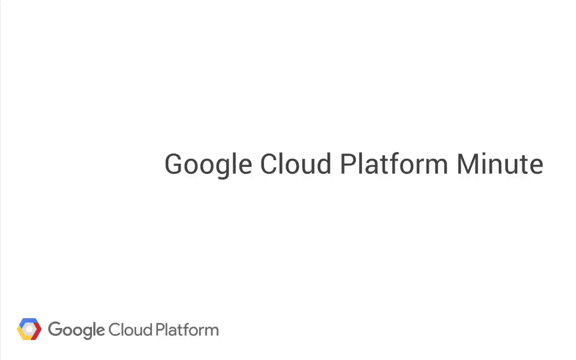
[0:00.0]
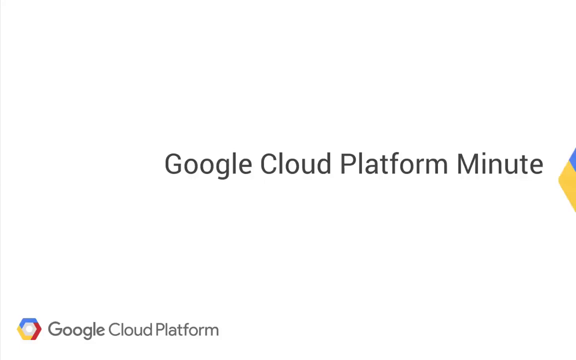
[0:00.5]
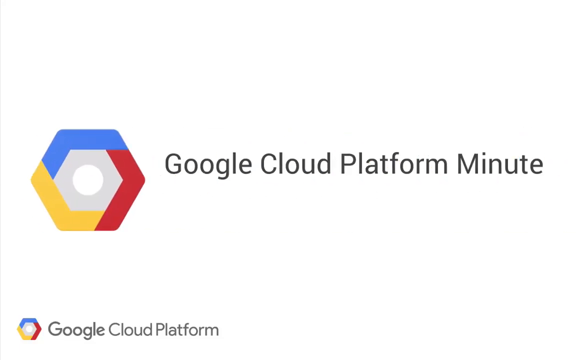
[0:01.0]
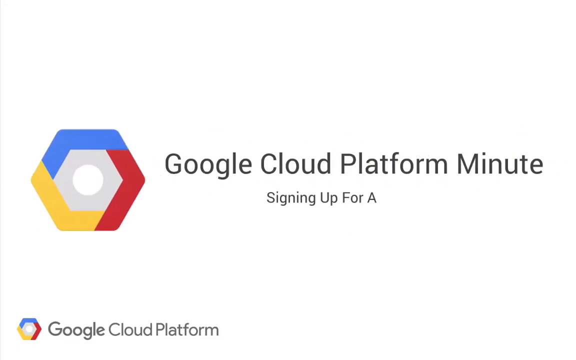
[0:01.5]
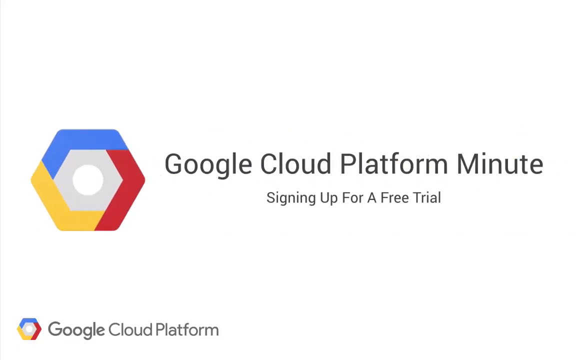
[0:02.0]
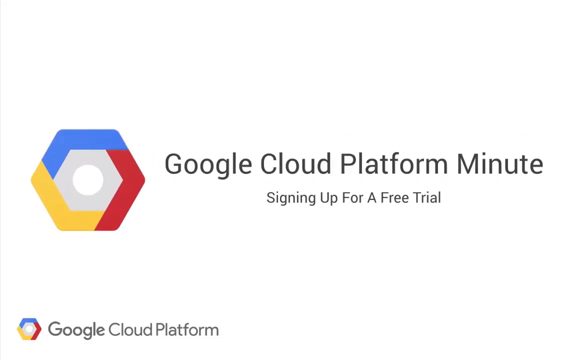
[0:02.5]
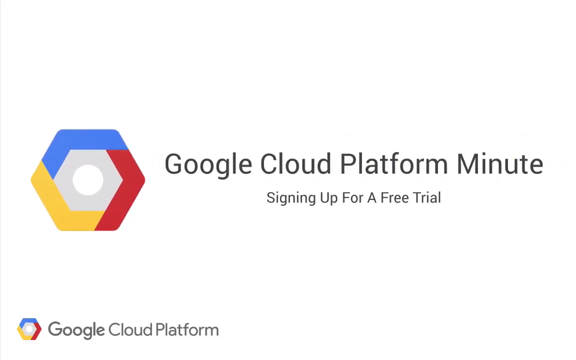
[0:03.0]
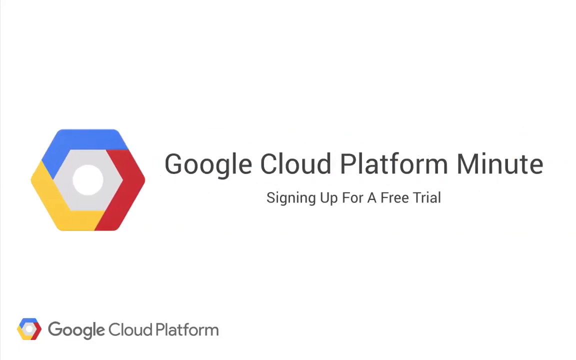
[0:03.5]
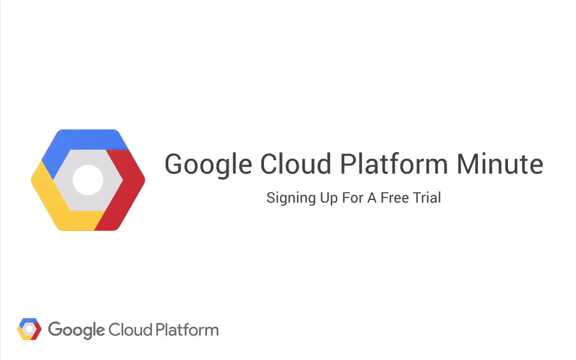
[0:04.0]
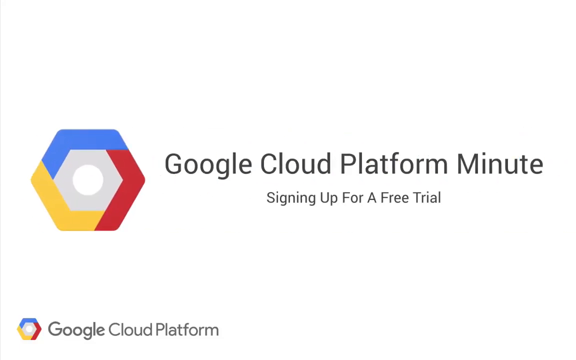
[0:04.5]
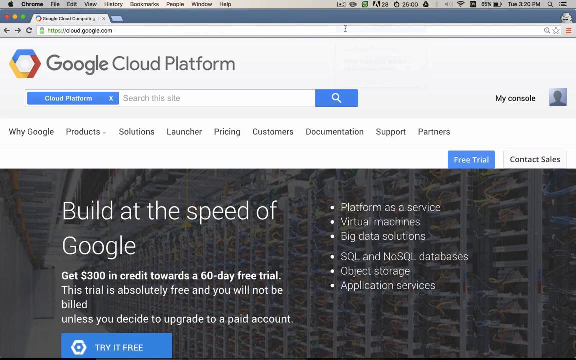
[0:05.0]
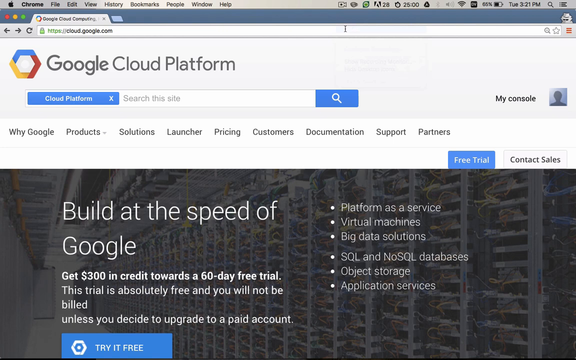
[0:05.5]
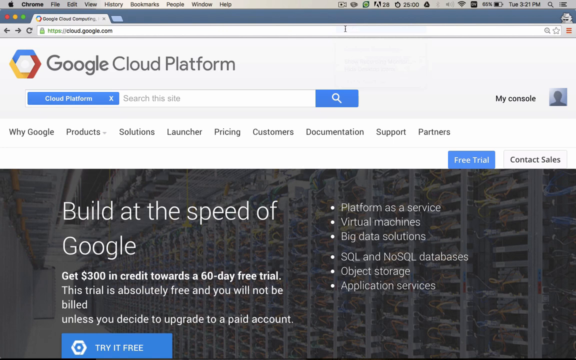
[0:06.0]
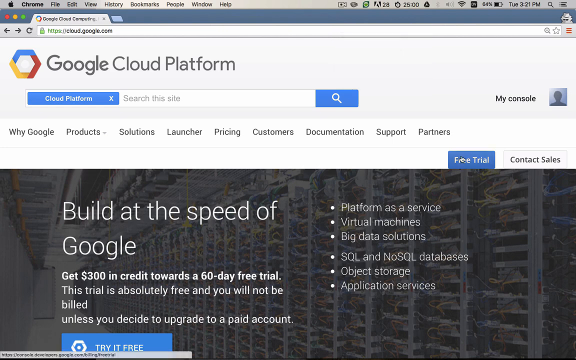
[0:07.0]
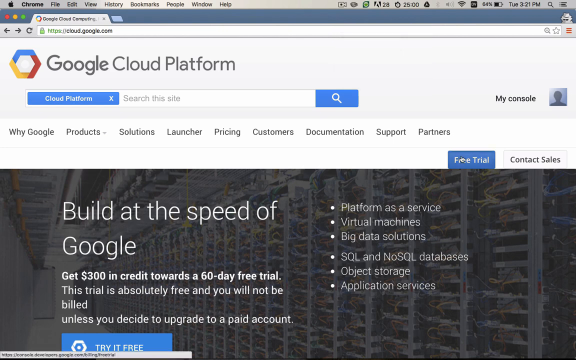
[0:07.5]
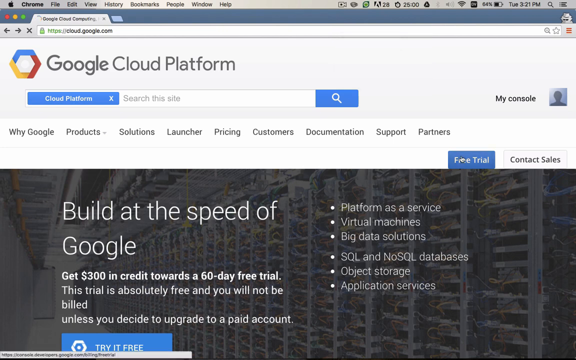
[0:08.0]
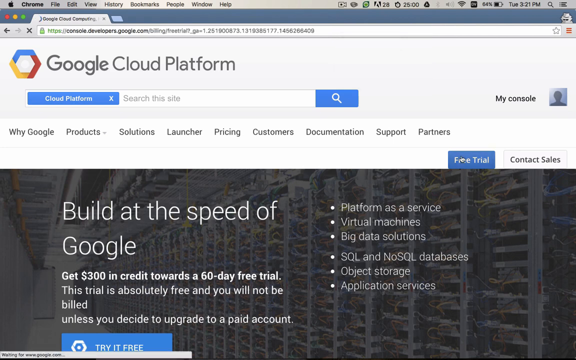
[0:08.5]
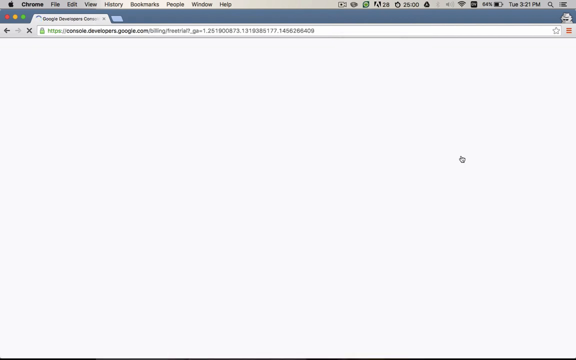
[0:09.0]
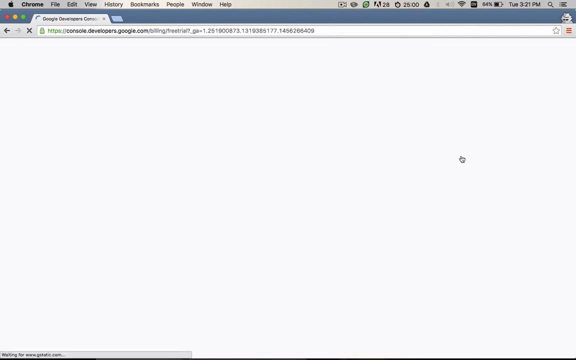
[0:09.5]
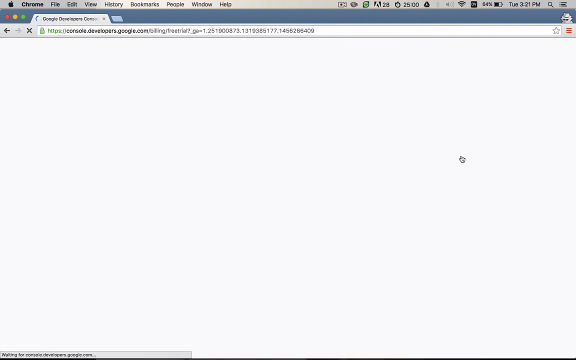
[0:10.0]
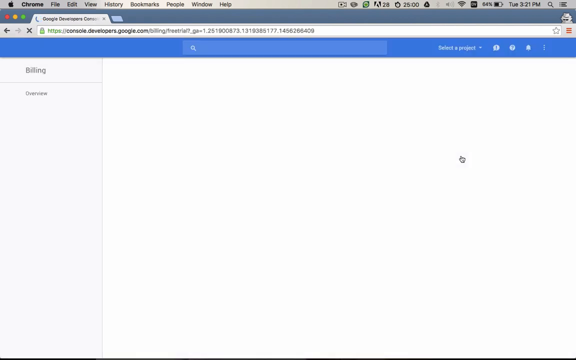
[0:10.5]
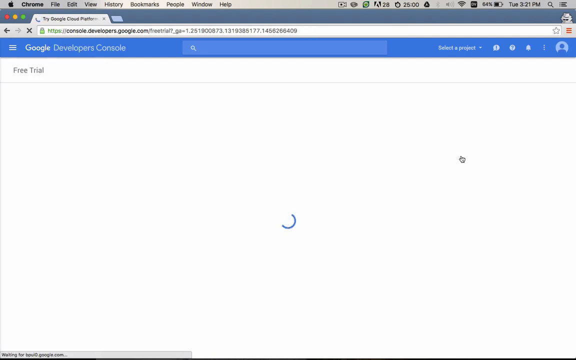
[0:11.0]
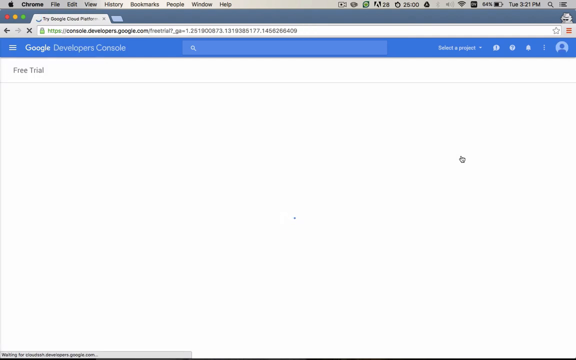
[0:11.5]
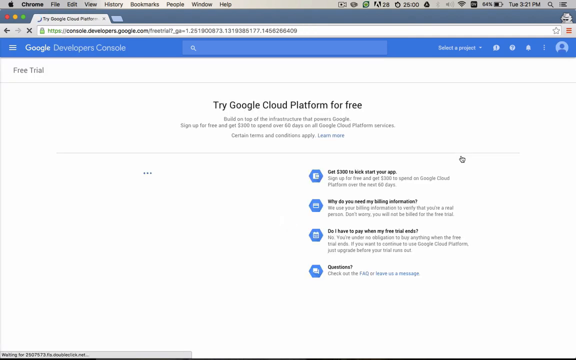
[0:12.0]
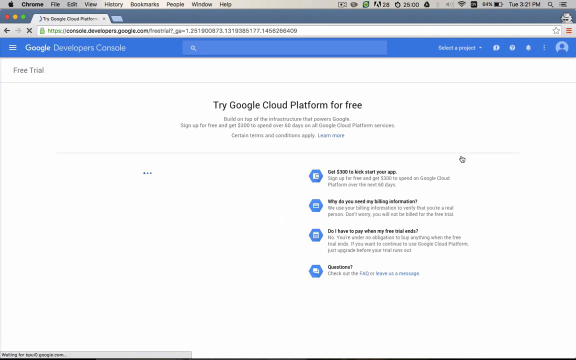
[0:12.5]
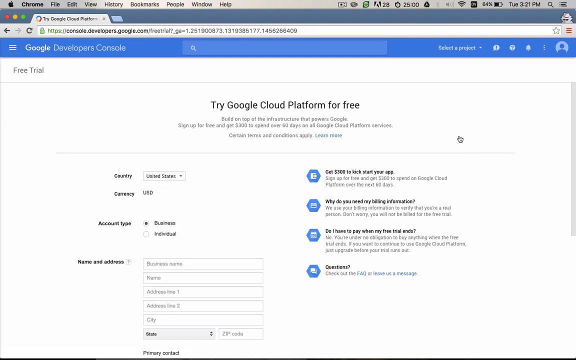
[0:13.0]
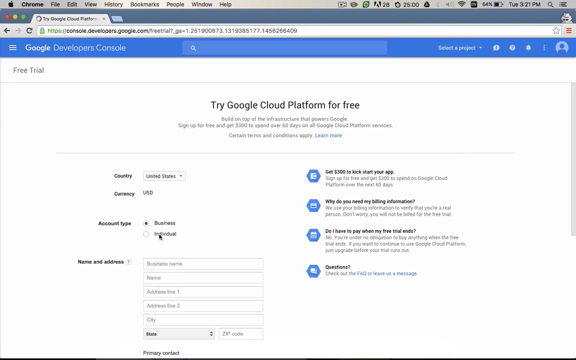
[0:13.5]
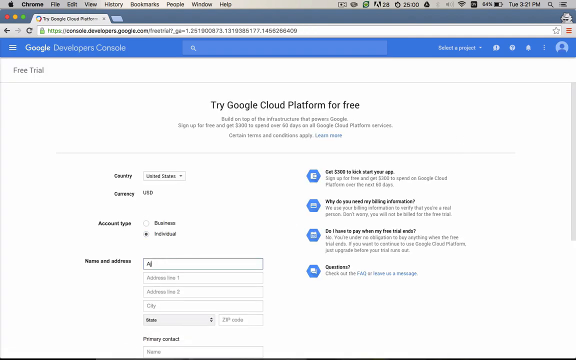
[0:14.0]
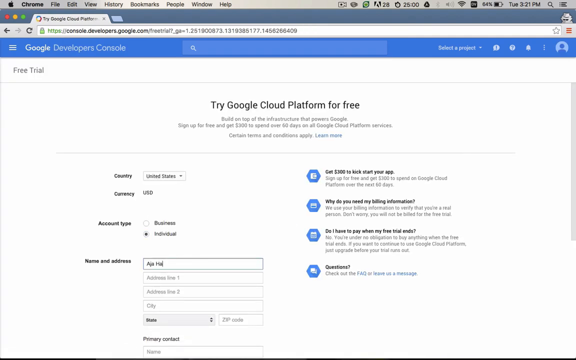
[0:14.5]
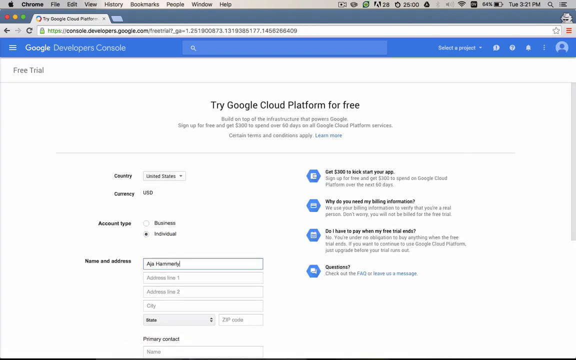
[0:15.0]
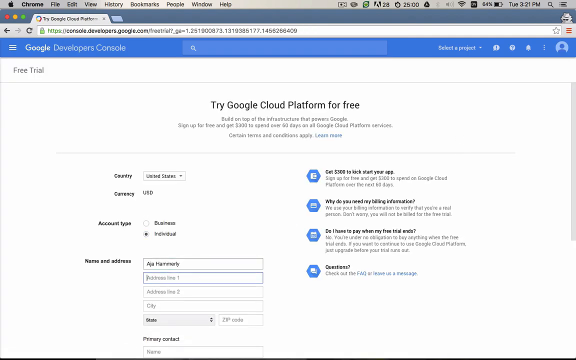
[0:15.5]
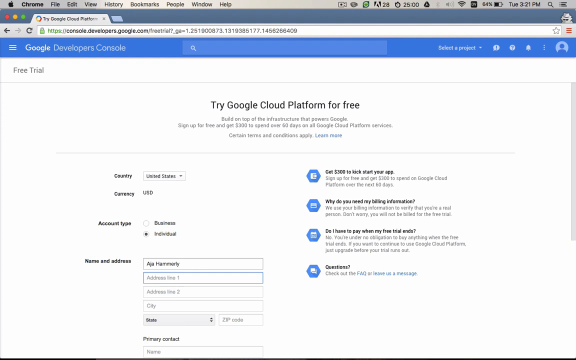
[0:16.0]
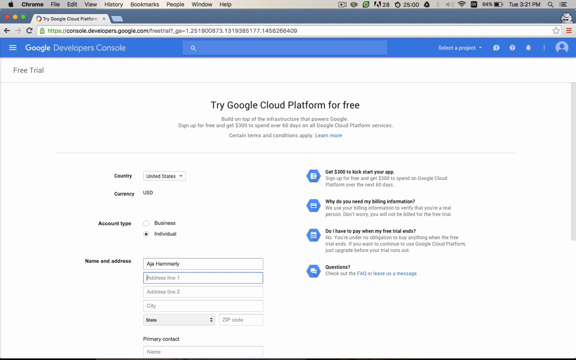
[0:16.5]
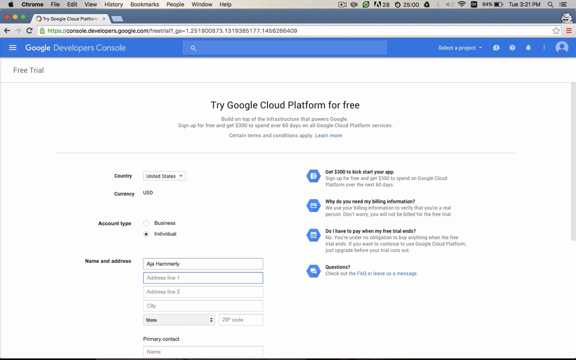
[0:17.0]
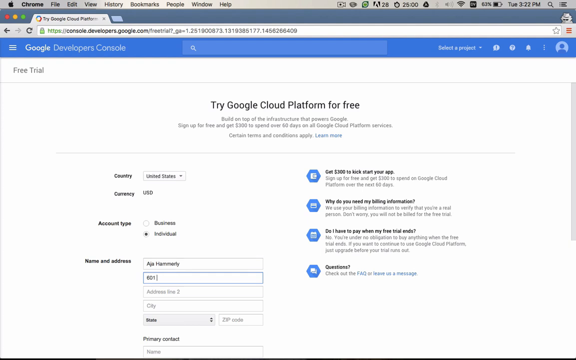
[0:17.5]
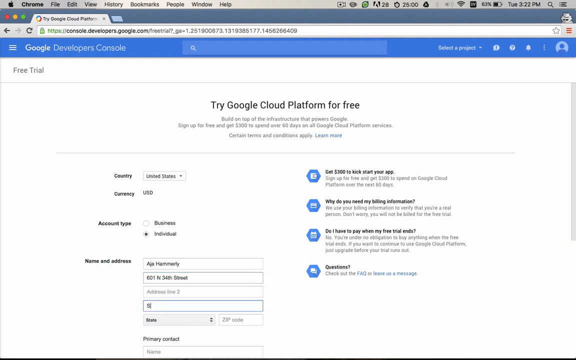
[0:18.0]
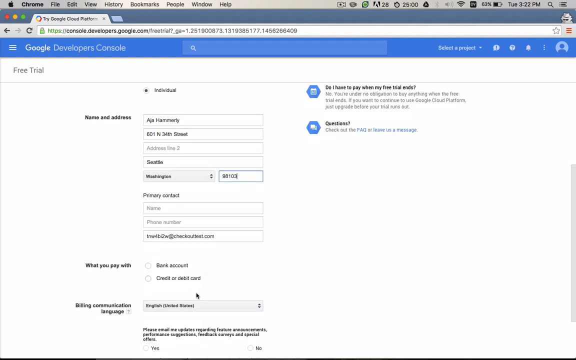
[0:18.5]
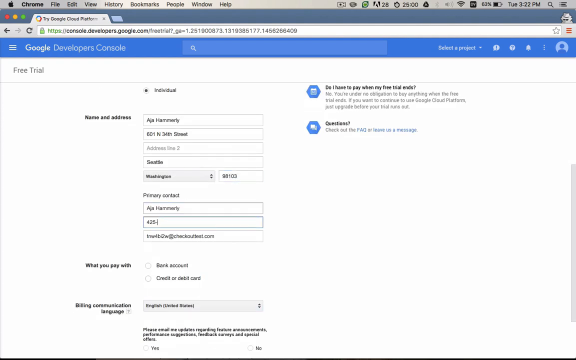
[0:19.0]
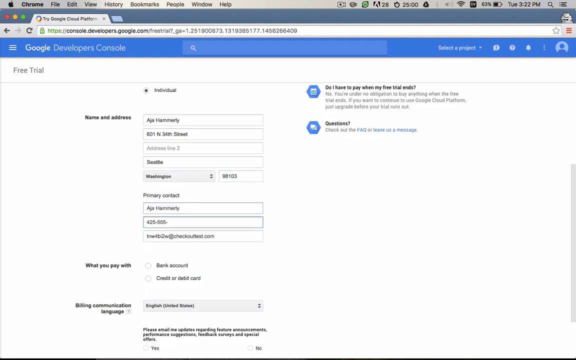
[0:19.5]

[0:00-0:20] The video, which looks like an instructional video, shows Google Cloud Platform Minute signing up for a free trial. Chrome is opened and the browser goes to cloud.google.com. "Build at the speed of Google" appears on a black background, while the Google Cloud Platform page has a white background with black lettering and menu items reading "Why Google product solutions, launchers, pricing". The view changes to a white screen that says "try Google for free", and a sign-up form appears with fields such as country and residence type. Someone fills in a name and address and enters a phone number as well, showing how to sign up for the Google Cloud Platform by first filling in an address and phone number.